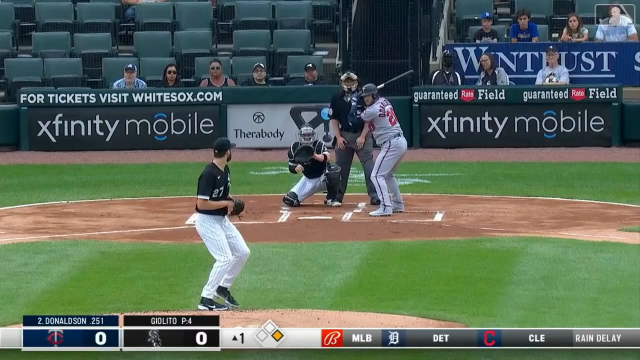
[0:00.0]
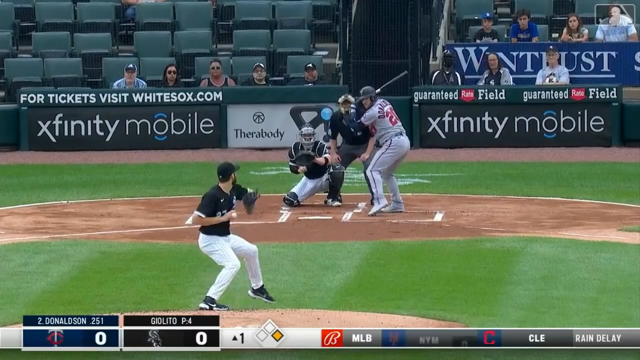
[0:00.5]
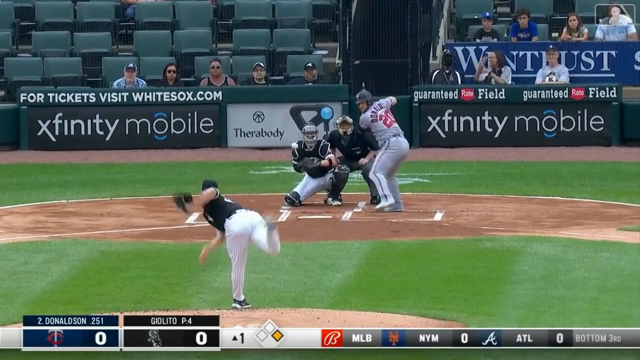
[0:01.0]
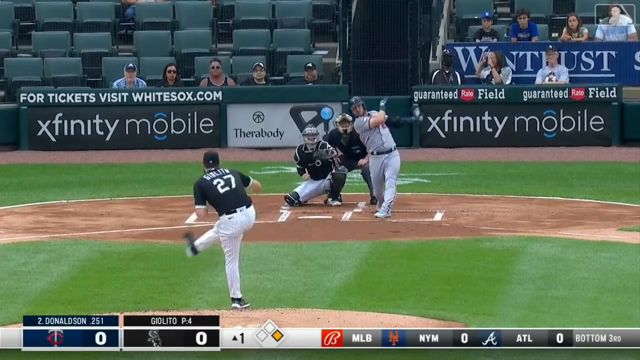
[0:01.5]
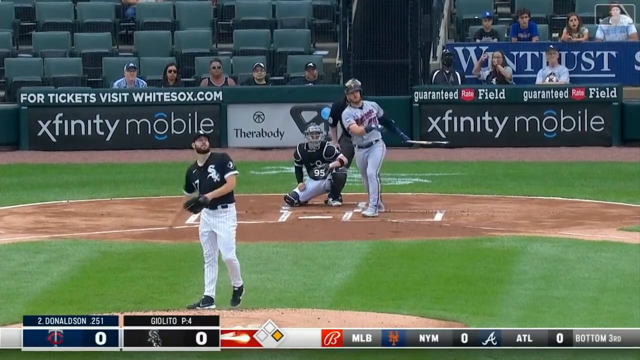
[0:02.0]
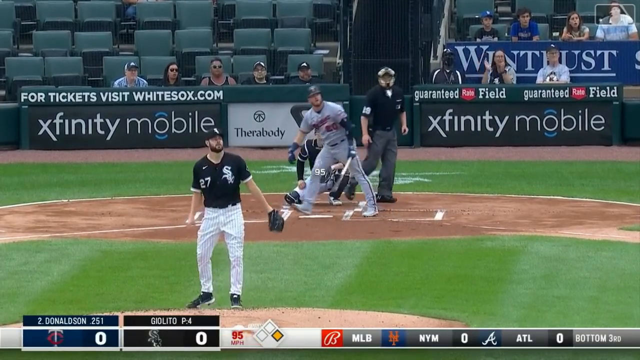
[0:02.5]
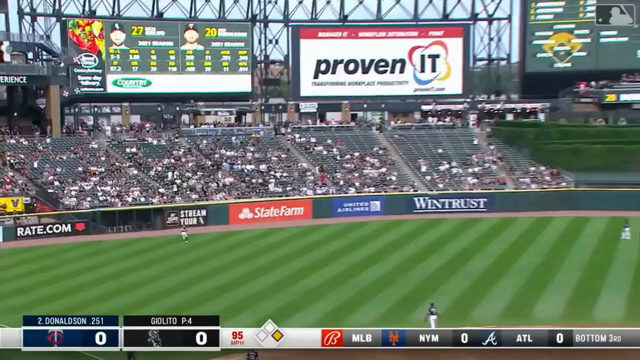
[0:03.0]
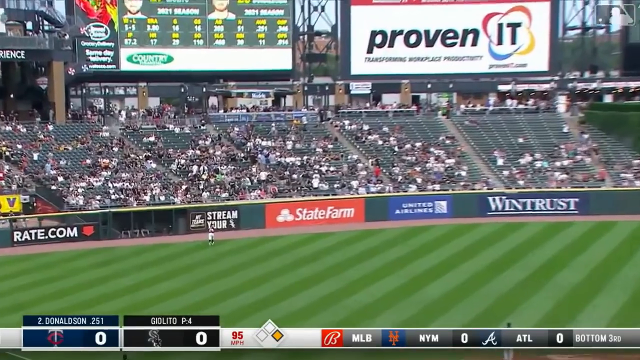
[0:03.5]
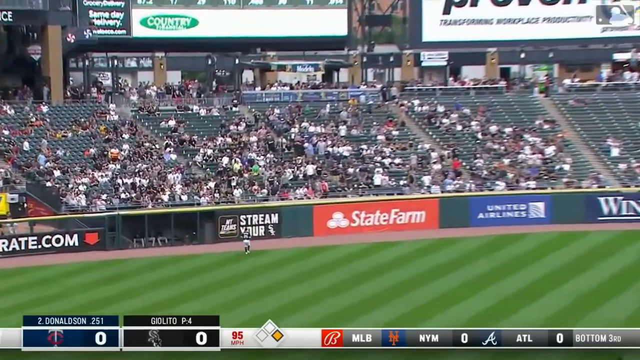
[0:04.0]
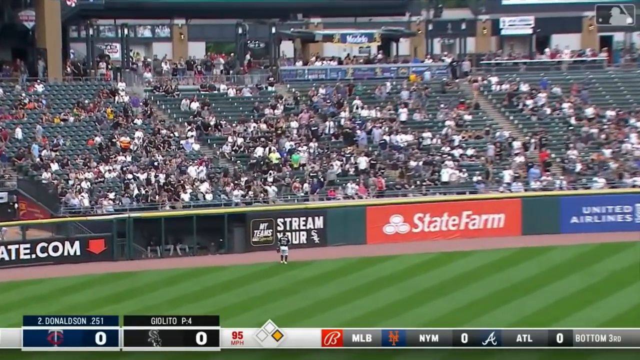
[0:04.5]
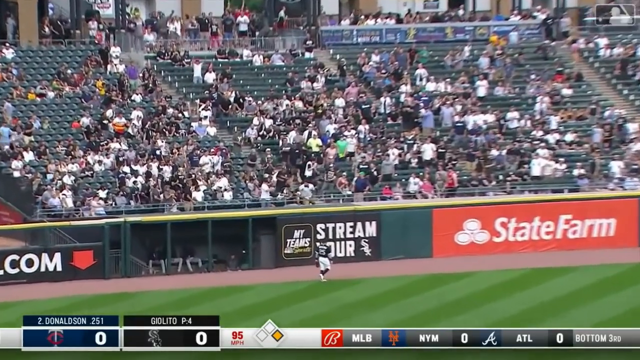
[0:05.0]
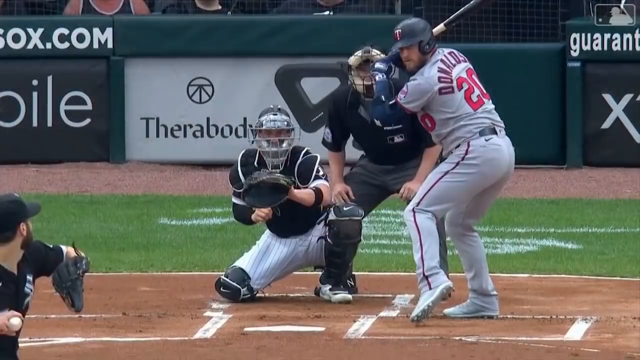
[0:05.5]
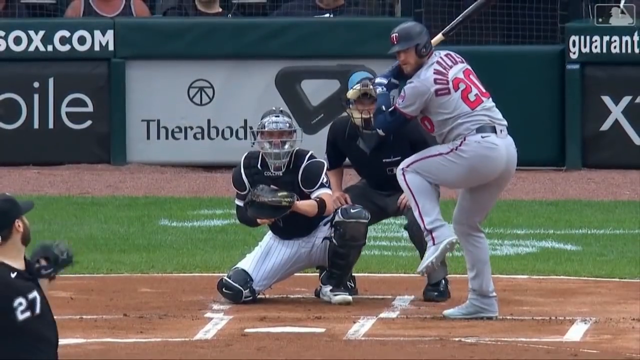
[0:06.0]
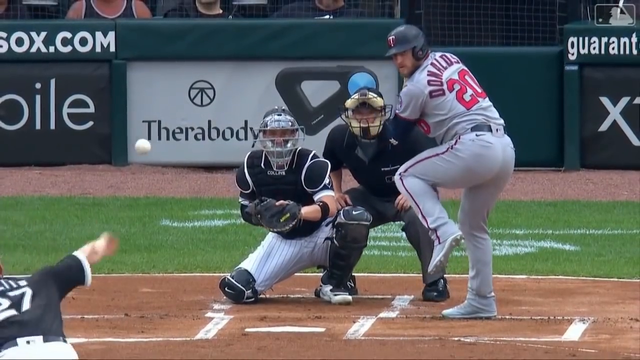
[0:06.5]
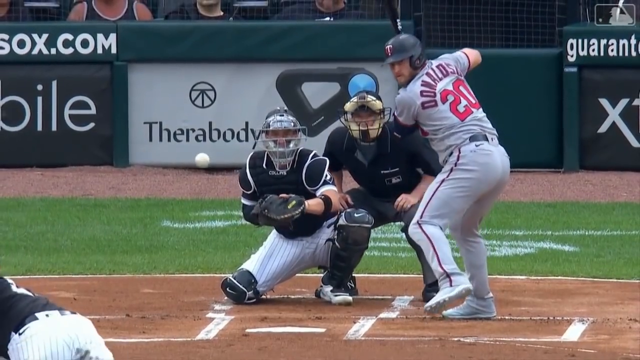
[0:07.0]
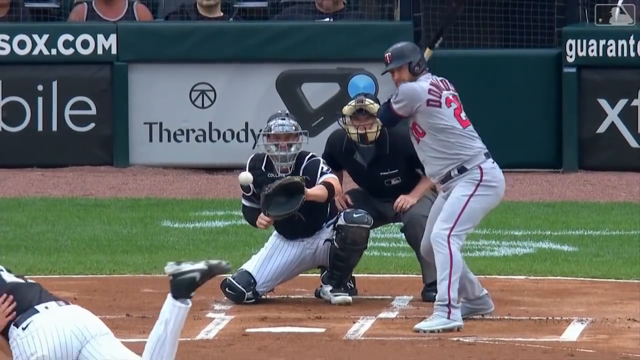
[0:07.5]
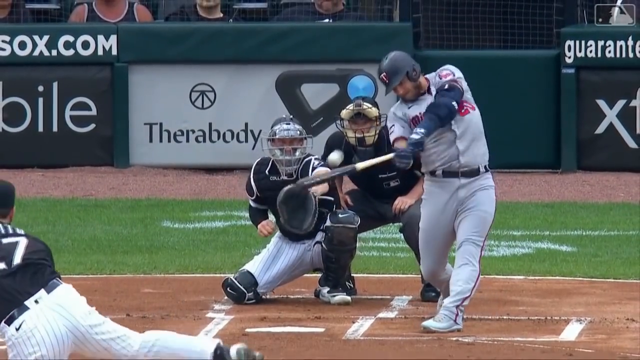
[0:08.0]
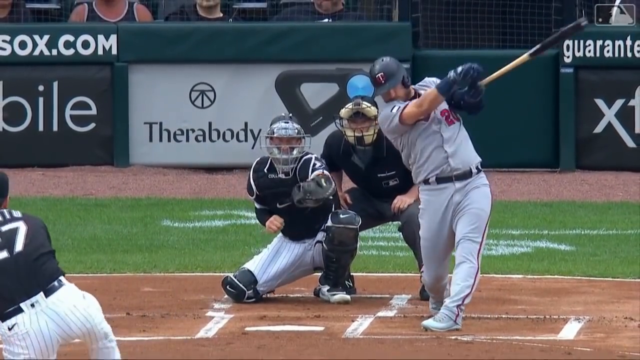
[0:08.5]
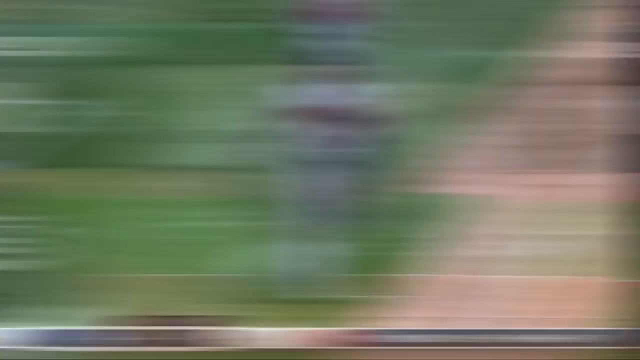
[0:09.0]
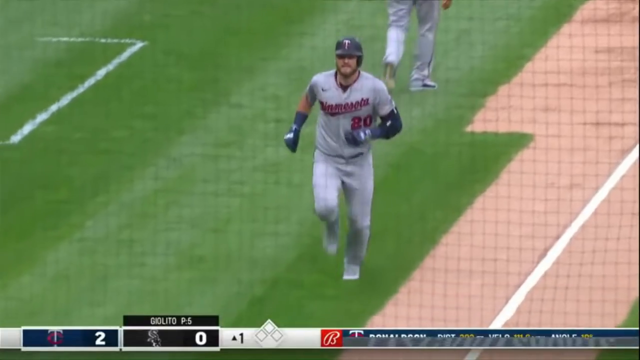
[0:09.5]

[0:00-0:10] A baseball game is underway. A man in a gray t-shirt and gray pants is on the field, while his opponent wears a black t-shirt and white pants. The audience is watching the match. There are three players on the field along with one referee or coach, and the man in the gray t-shirt and gray pants is running. Sponsors including Xfinity Mobile, Win Trust and Terra Body are visible.